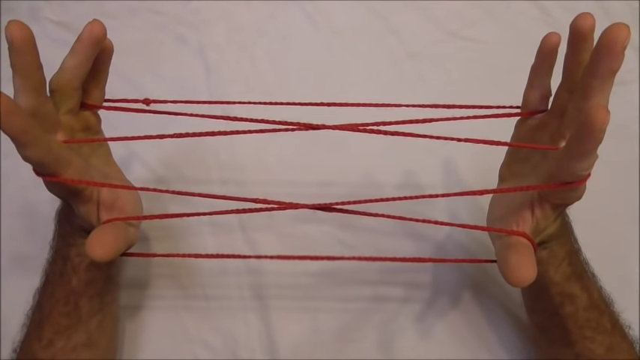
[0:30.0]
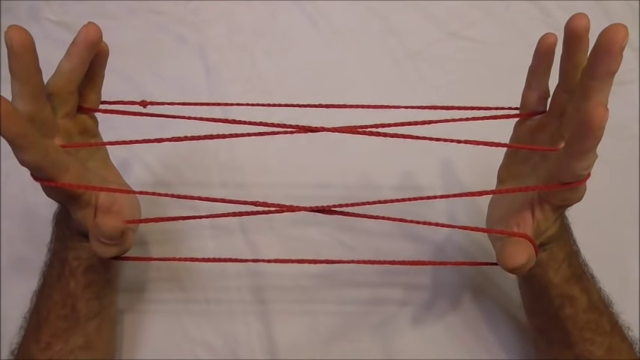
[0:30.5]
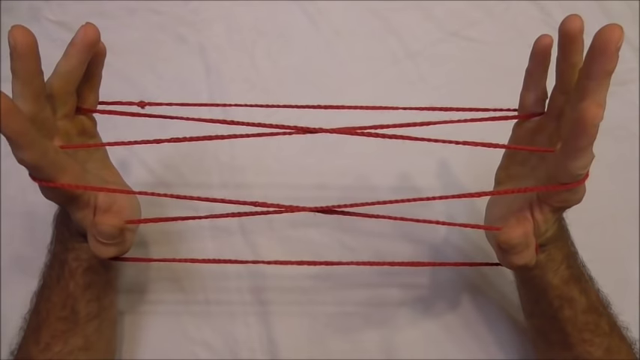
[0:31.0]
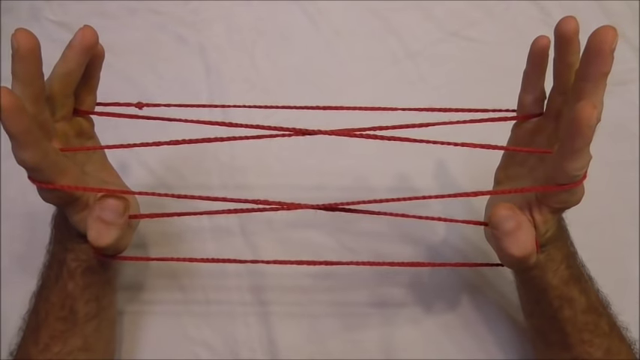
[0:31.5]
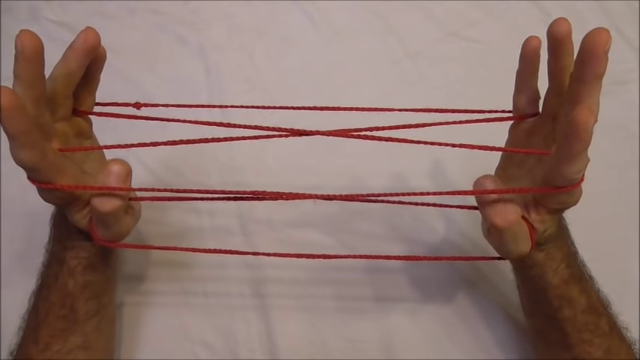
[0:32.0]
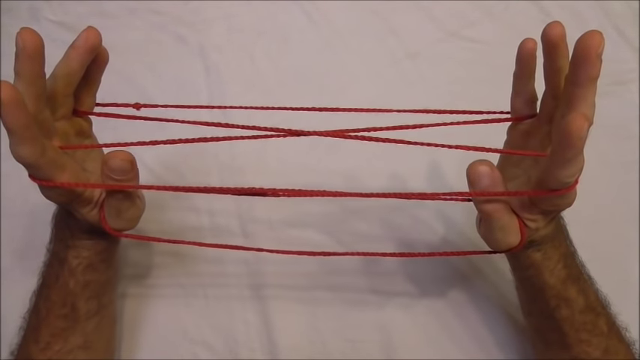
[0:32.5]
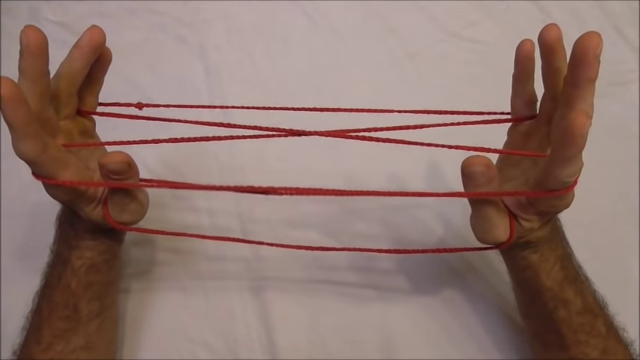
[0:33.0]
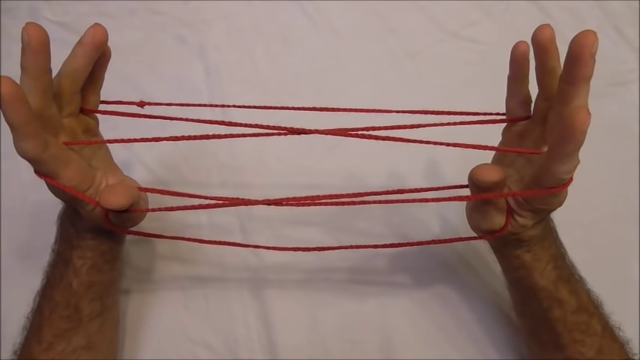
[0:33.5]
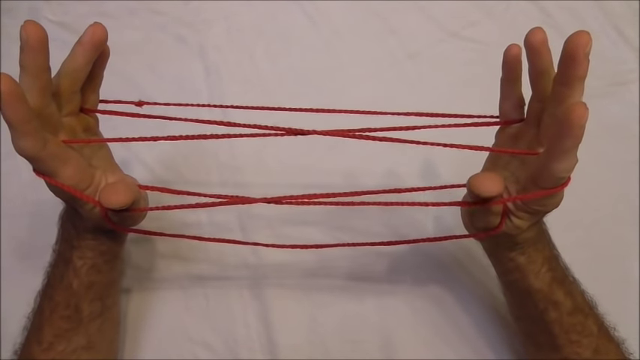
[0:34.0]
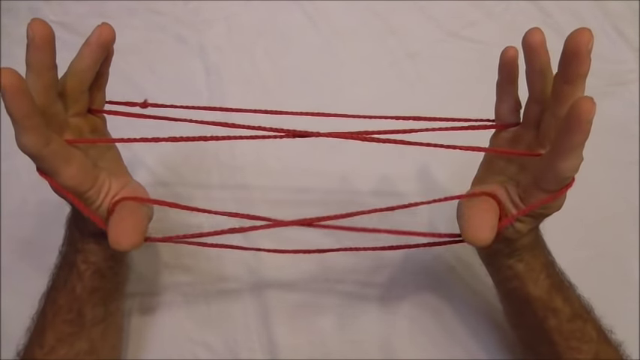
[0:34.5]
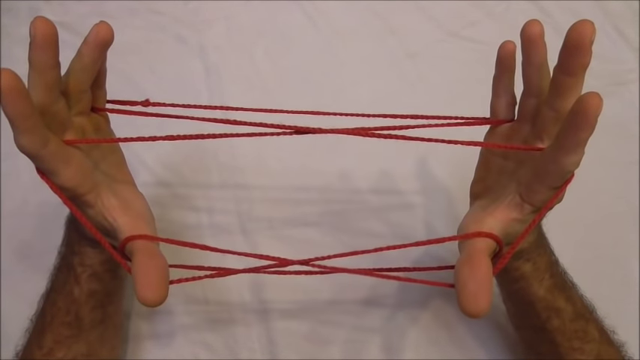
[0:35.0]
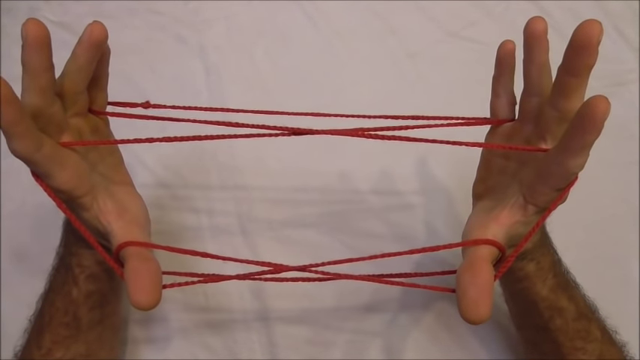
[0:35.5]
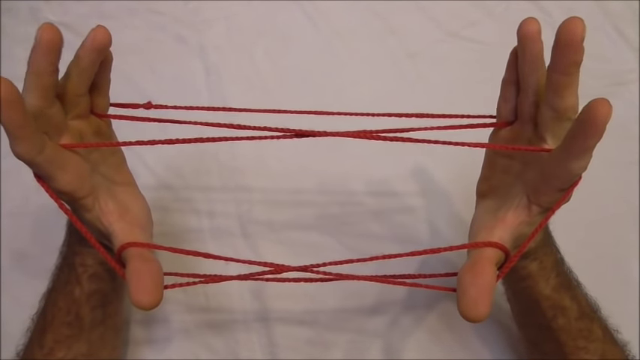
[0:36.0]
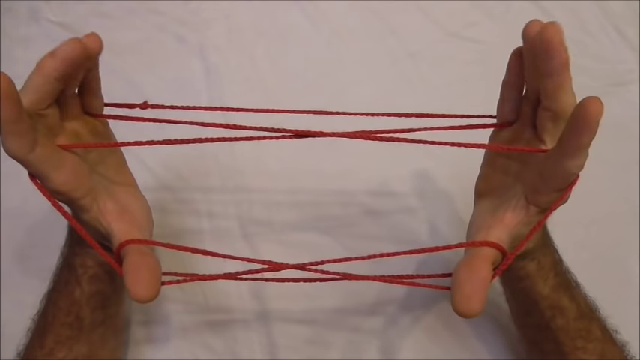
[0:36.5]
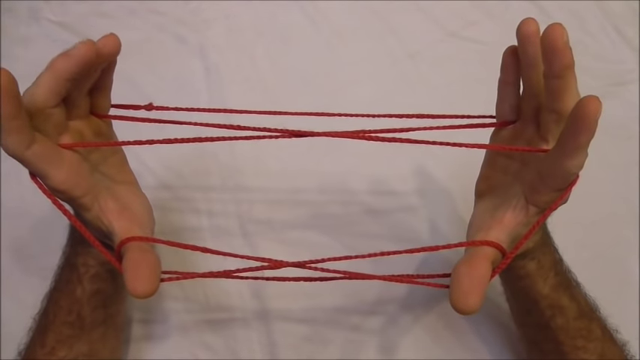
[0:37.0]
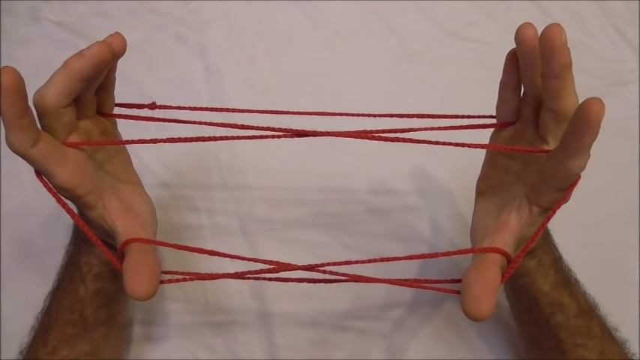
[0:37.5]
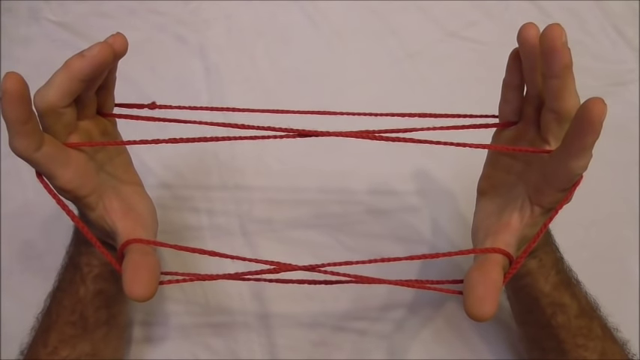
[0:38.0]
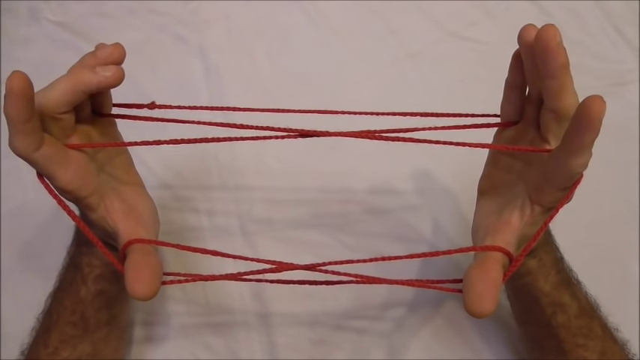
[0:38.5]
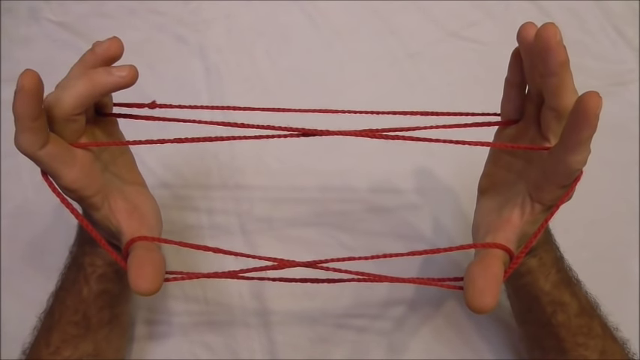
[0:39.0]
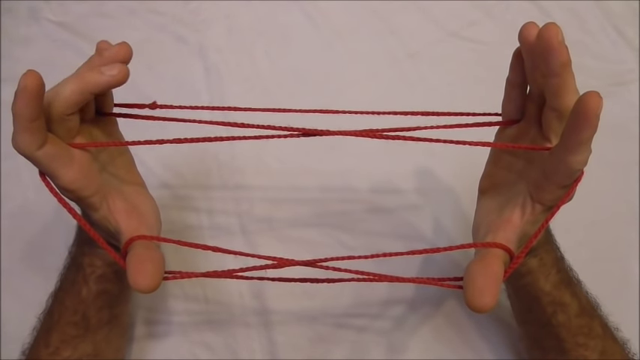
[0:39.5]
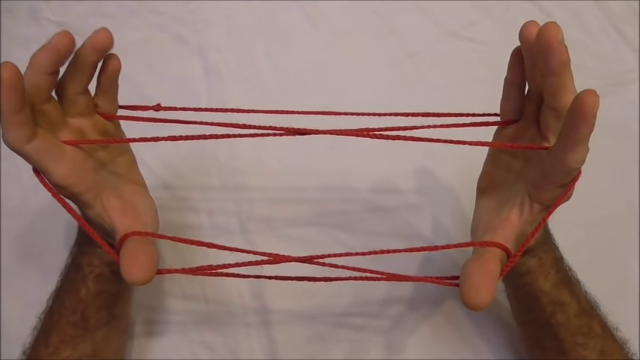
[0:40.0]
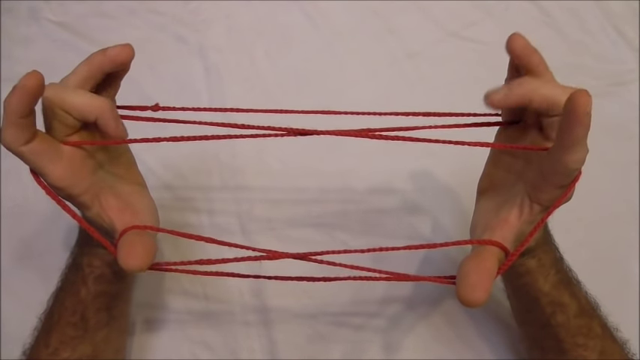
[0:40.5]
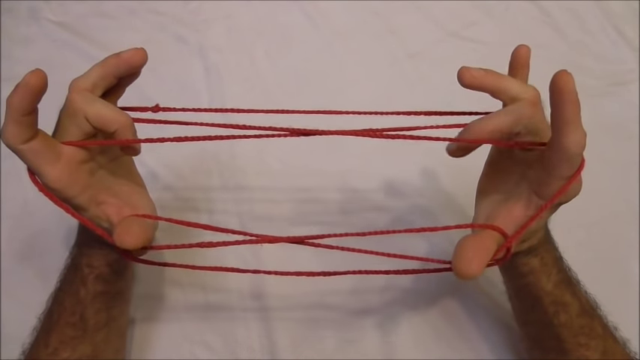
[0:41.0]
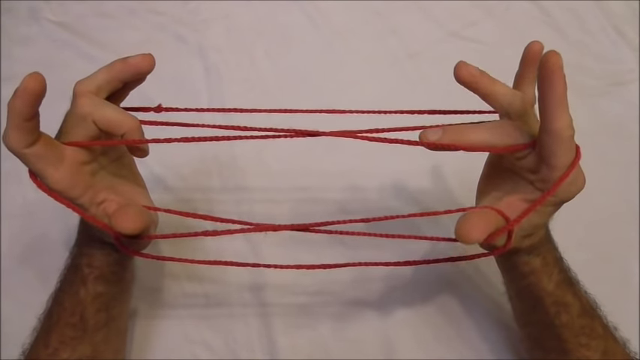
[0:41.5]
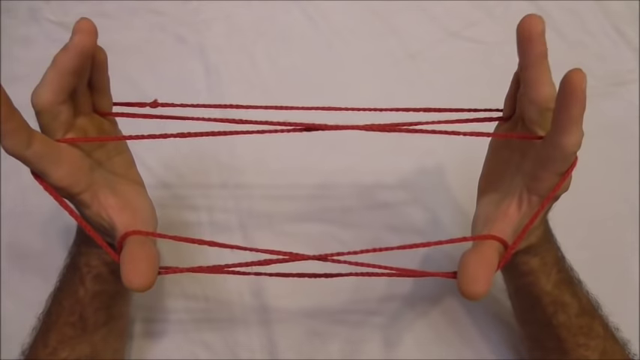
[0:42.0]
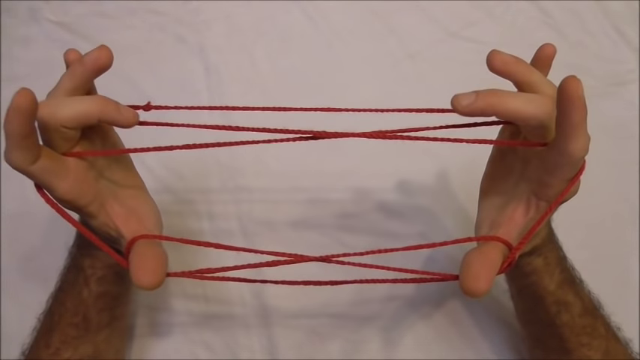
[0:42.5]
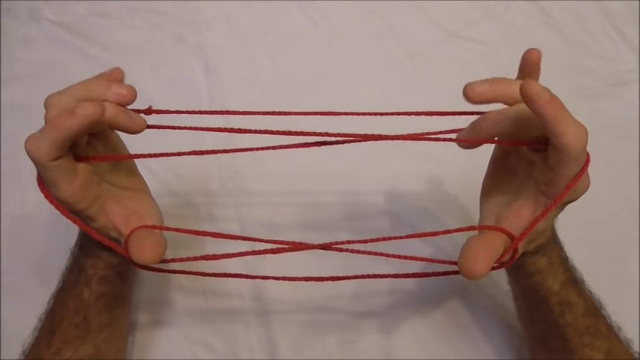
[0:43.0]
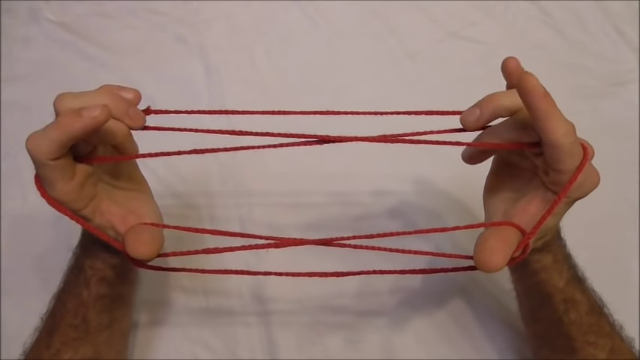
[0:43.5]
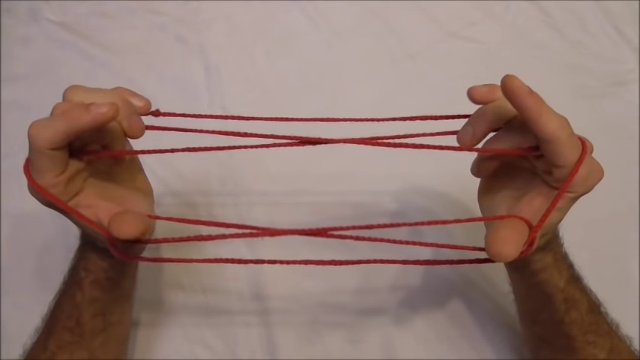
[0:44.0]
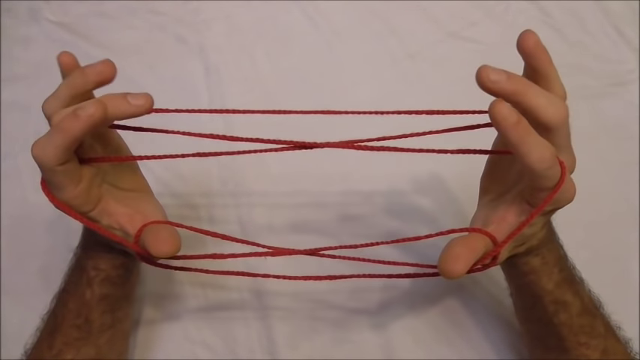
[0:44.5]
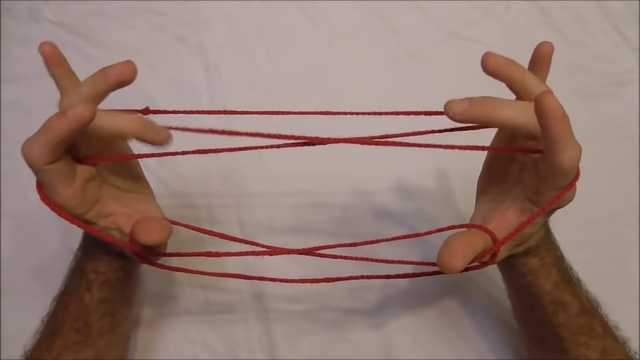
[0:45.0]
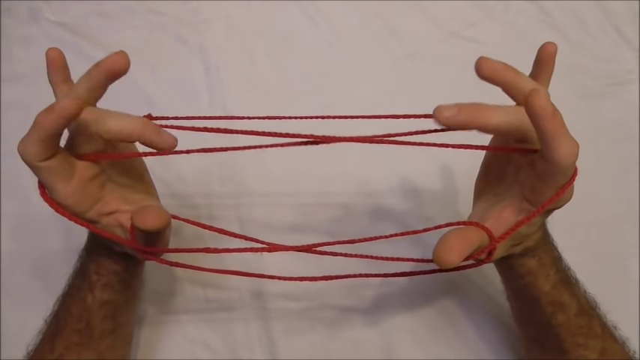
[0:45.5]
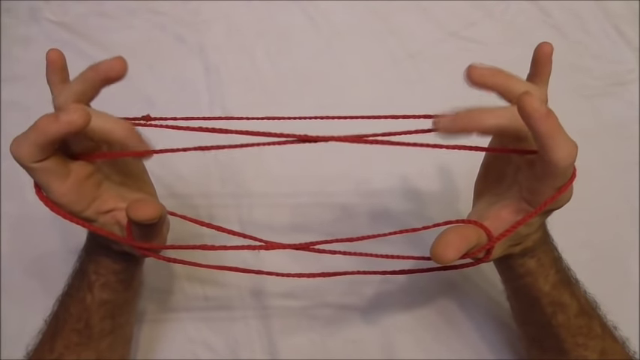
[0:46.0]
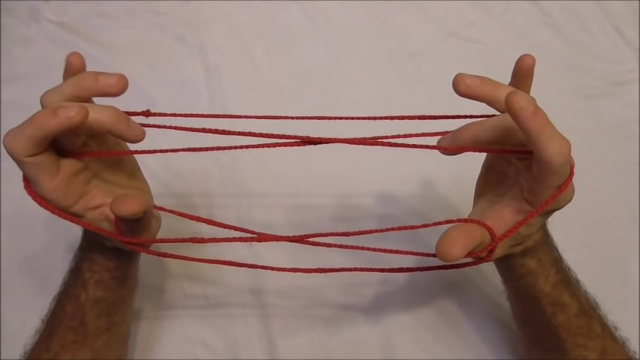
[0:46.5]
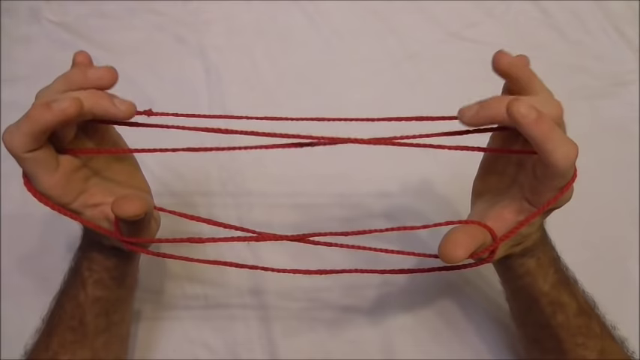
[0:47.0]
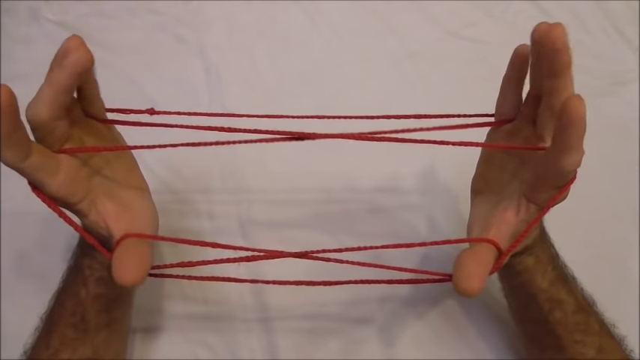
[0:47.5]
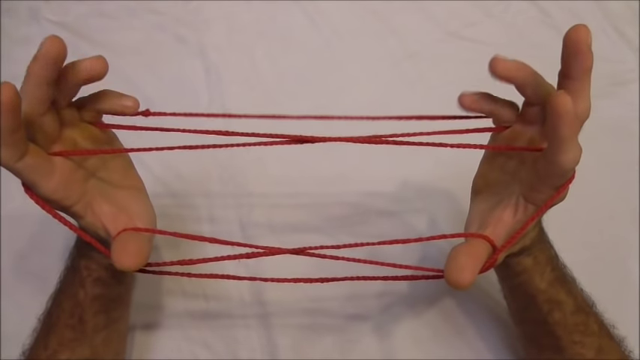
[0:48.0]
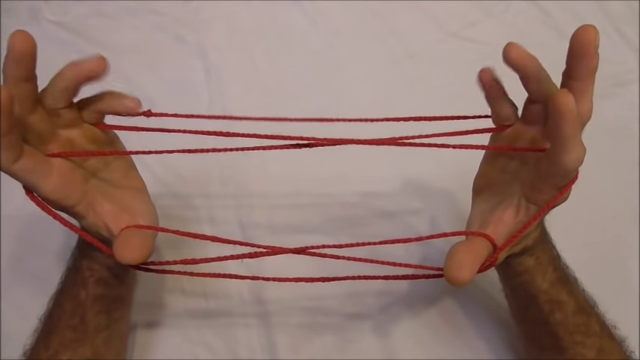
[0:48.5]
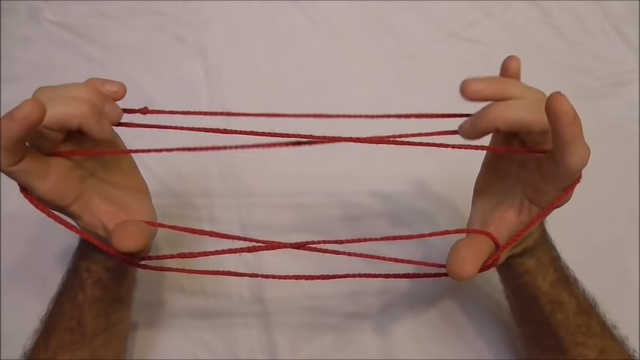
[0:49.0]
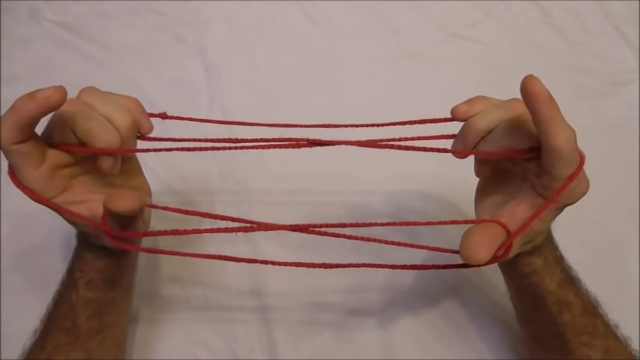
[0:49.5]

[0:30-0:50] Against the white background, the man's hands are on the left and right with the red yarn string between them in a zigzag pattern. He inserts both thumbs into one of the zigzags, then pushes his middle finger and index finger down in between, repeating this process while keeping his thumbs in the whole time and showing where to insert the fingers: the middle of the zigzag pattern. He then opens his hands back up and finally inserts his fingers into the middle of the zigzag pattern, not his pointer fingers, only his other fingers. As he finishes pointing his fingers down into the middle, his thumbs begin to come straight up, specifically his left one.